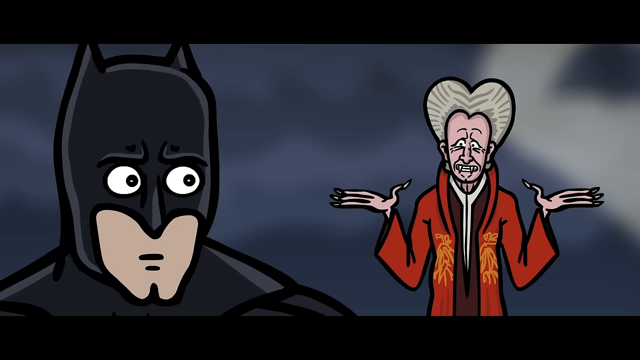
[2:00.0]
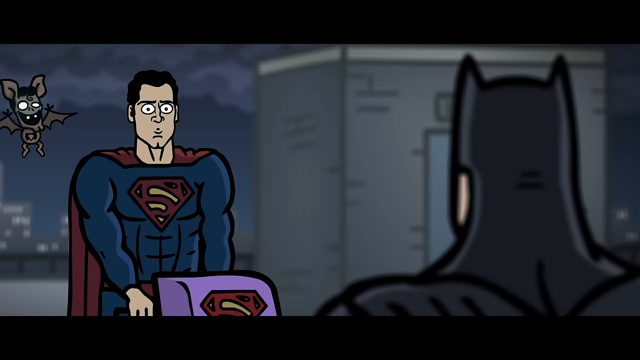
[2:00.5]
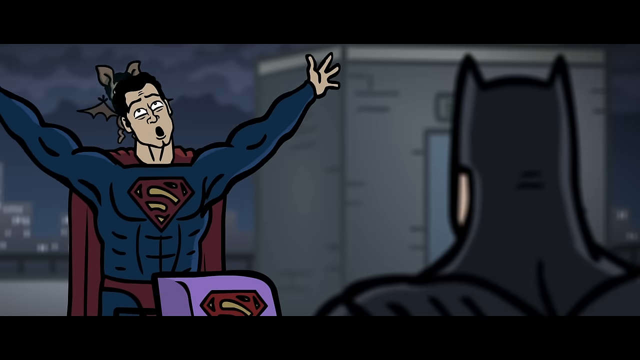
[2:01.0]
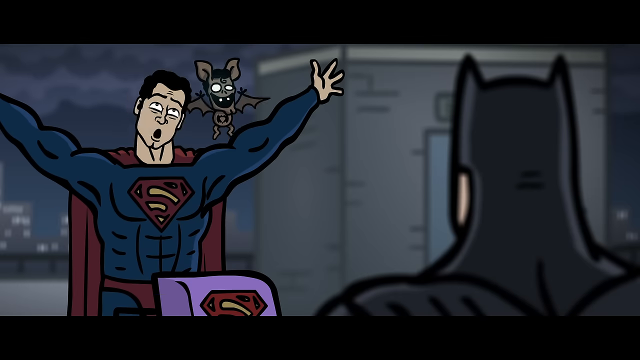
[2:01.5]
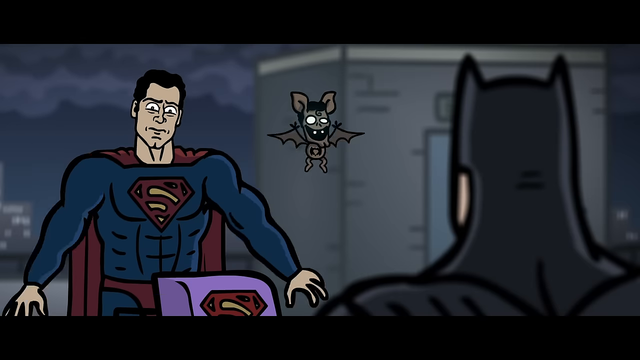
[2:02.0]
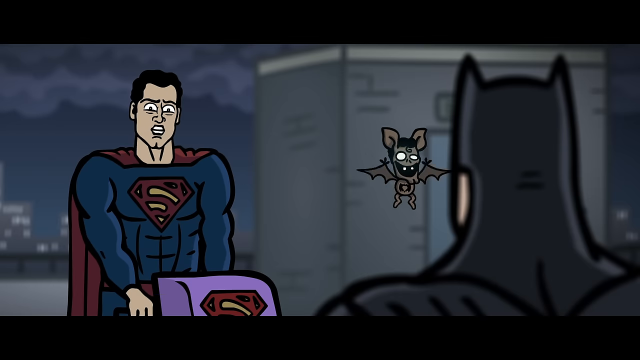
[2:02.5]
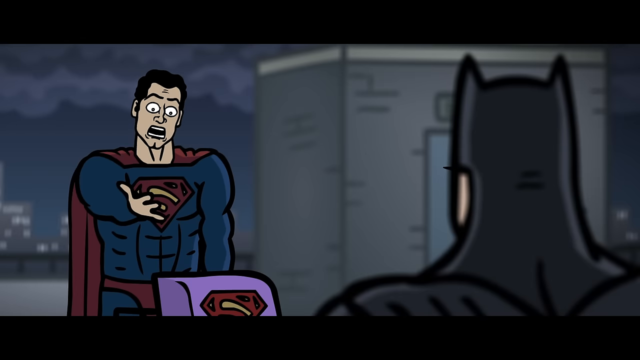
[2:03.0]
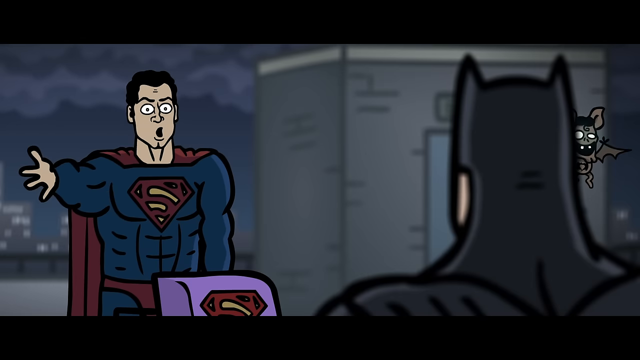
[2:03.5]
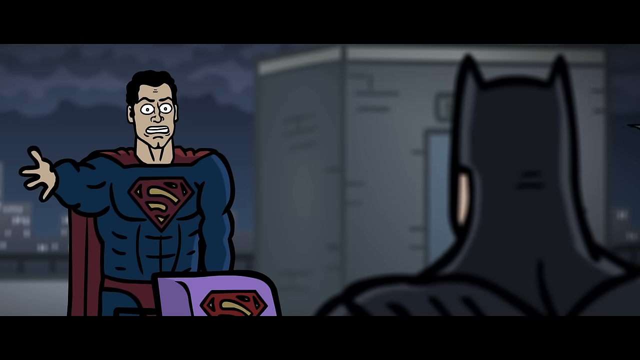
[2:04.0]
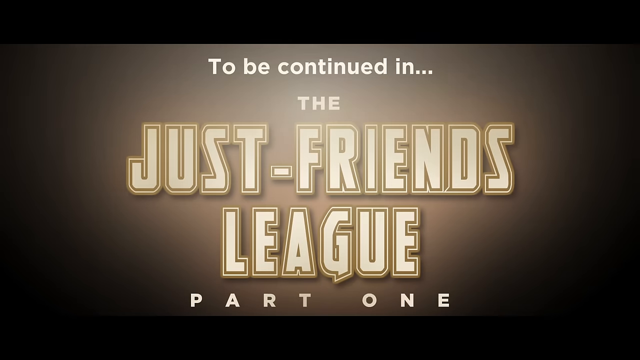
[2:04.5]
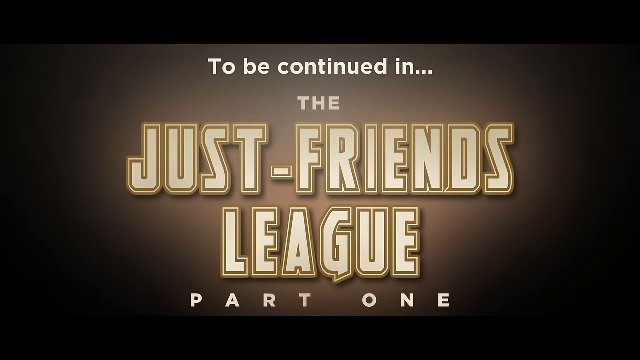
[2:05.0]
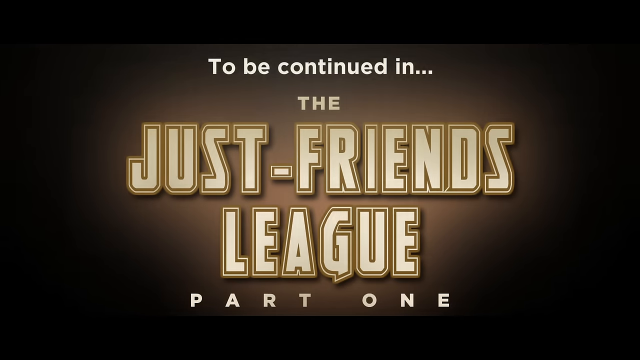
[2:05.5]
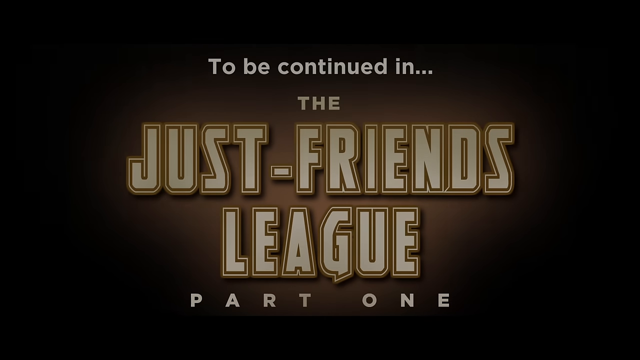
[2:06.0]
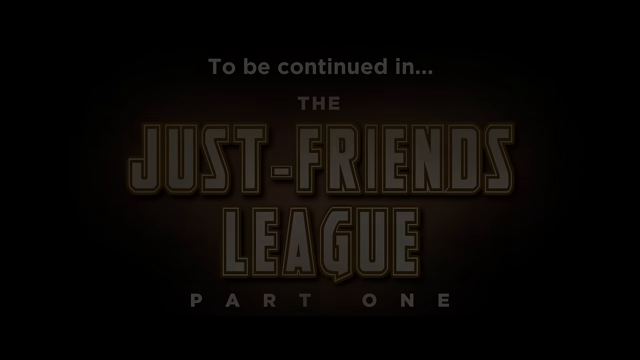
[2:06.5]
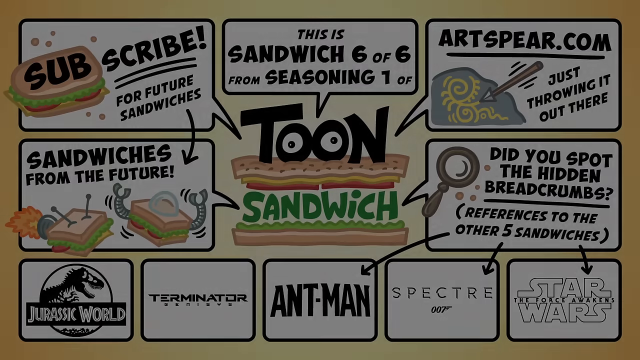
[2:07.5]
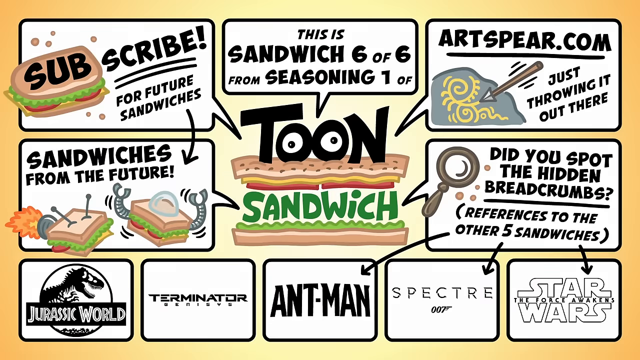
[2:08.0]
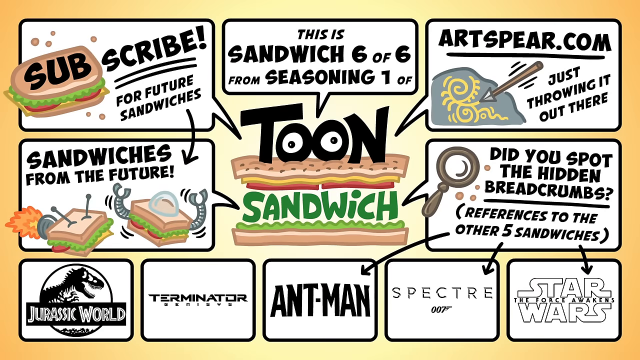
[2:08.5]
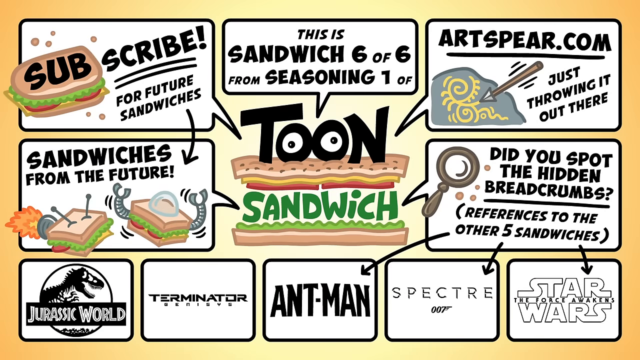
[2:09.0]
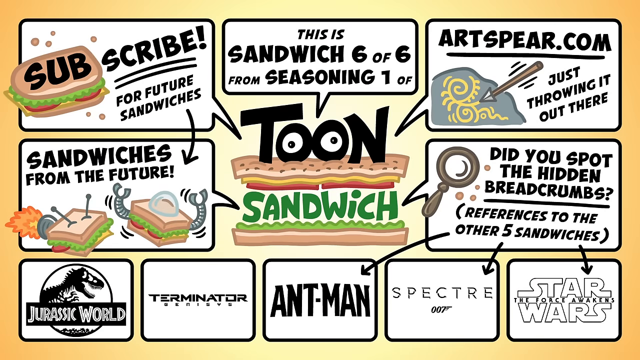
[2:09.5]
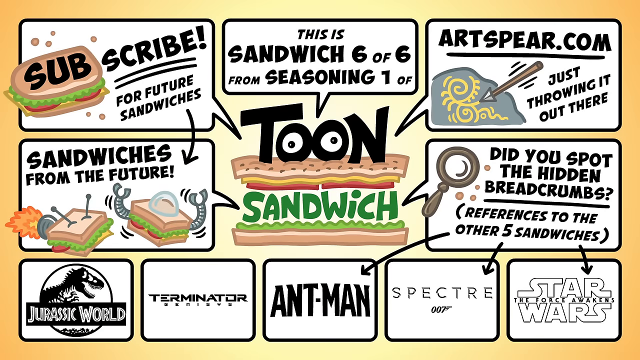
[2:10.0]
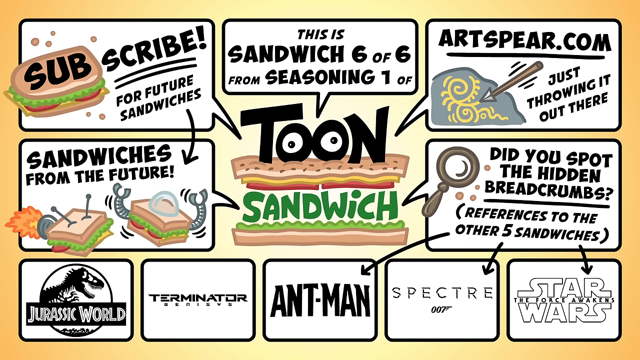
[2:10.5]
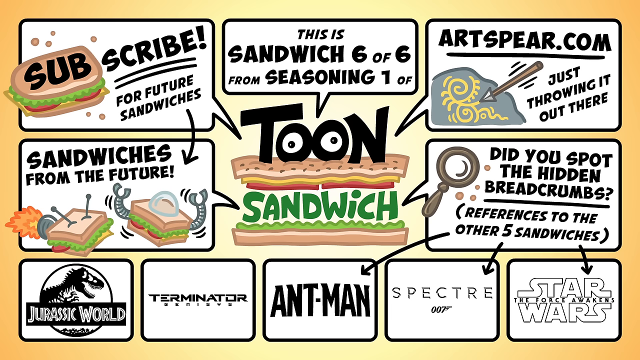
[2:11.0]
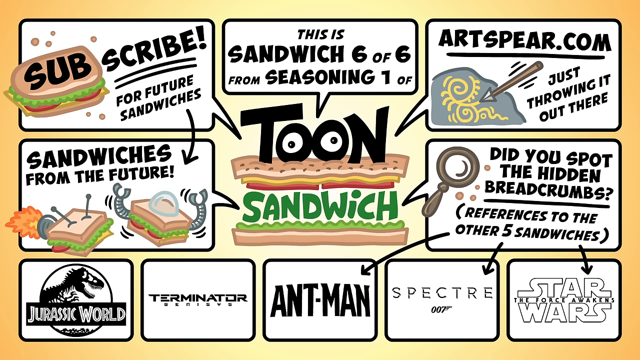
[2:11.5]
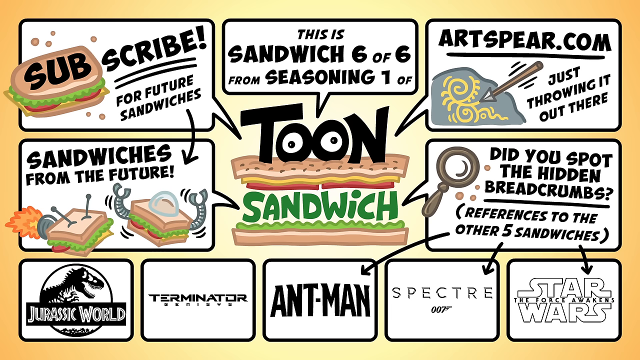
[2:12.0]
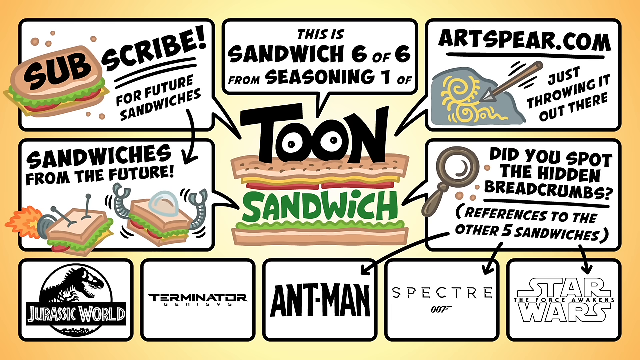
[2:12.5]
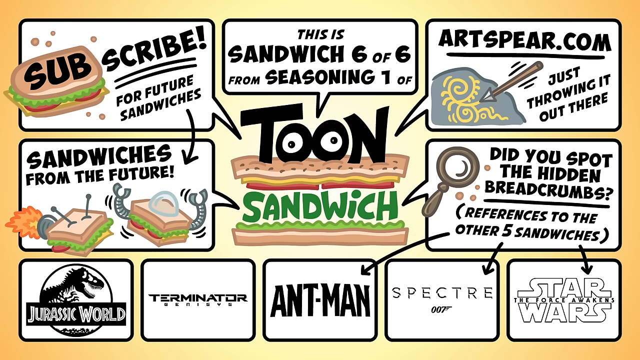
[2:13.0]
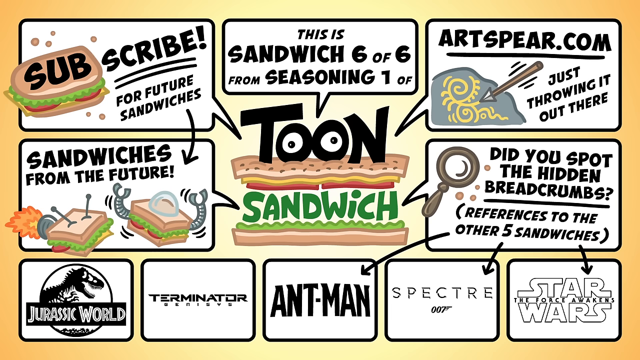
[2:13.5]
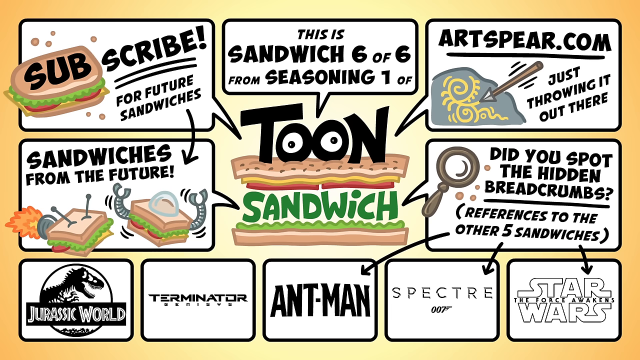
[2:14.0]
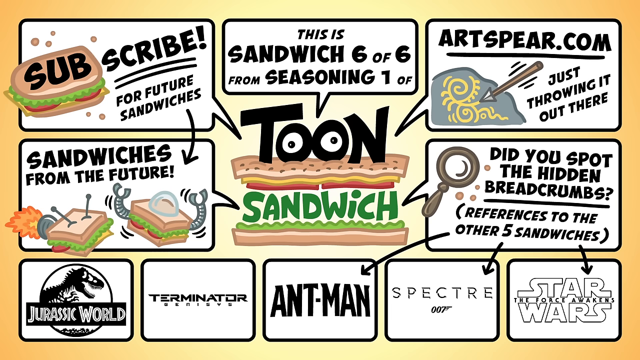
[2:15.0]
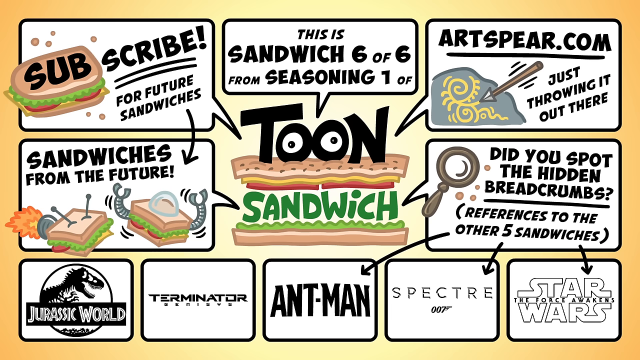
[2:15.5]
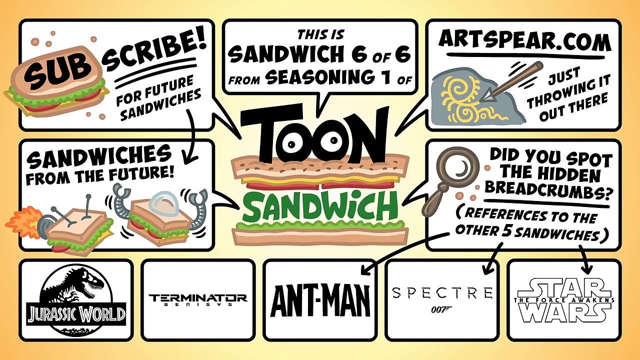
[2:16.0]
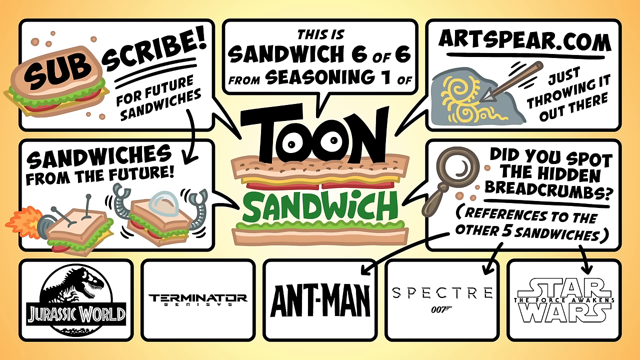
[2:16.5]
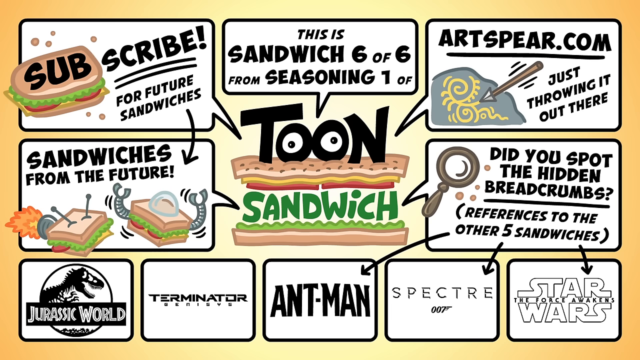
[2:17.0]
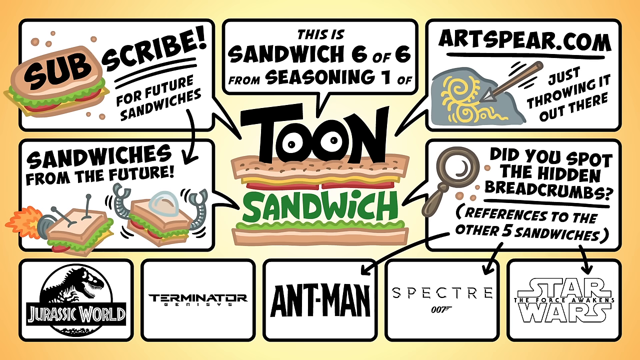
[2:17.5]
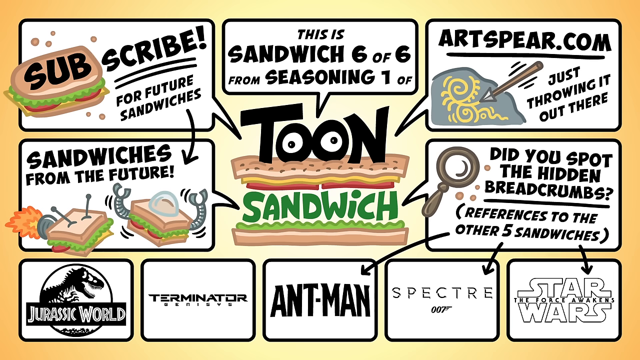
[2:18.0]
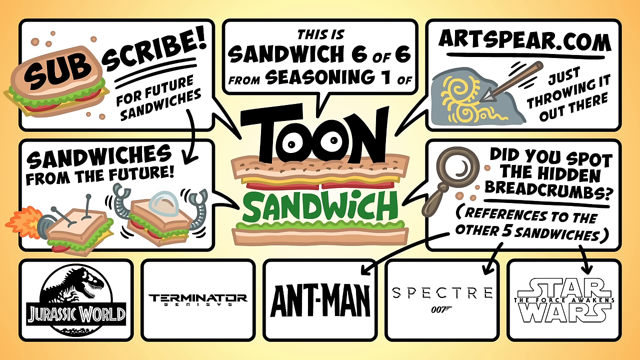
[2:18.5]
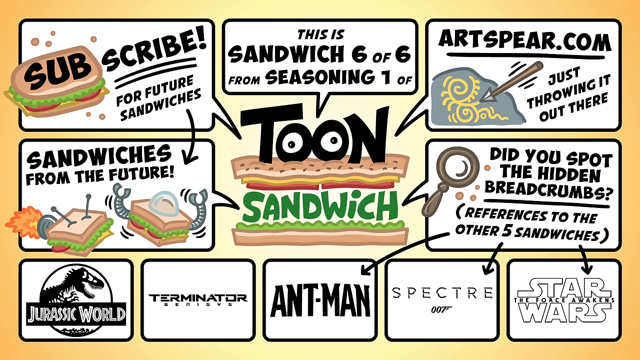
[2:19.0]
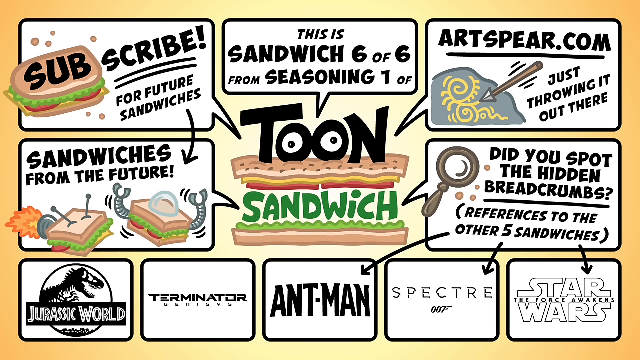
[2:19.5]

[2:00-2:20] Another character stands on the roof with them: tall and thin, with very long fingers and very long fingernails, a red jacket and a poof of gray hair, and apparently fangs. Superman stands and raises both hands in the air, his arms at a 45-degree angle, while the baby bat flies around behind him. Superman puts his hands back on the stroller handles, then holds his right hand out toward Batman, and then puts his hand out sort of to the side. Text on screen reads "to be continued in the Just Friends League, part one." The screen fades to black. A screen then reads "Toon Sandwich." In the upper left corner it says "subscribe for future sandwiches," with the word "sub" written on top of a sandwich. Below that it says "sandwiches from the future," with an illustration of sandwiches with robot arms coming out of them.